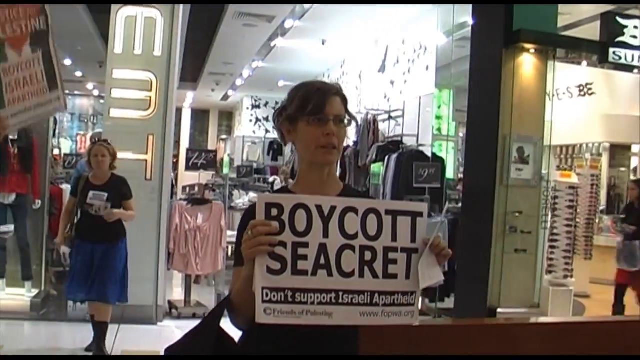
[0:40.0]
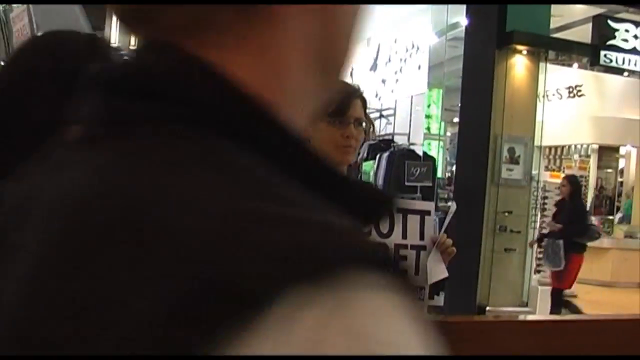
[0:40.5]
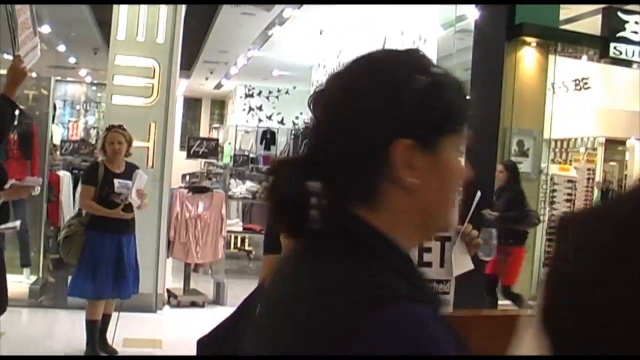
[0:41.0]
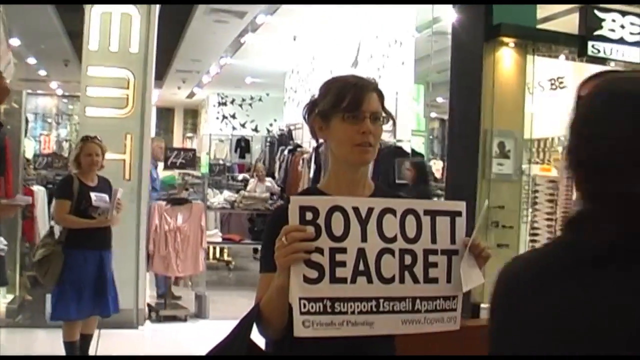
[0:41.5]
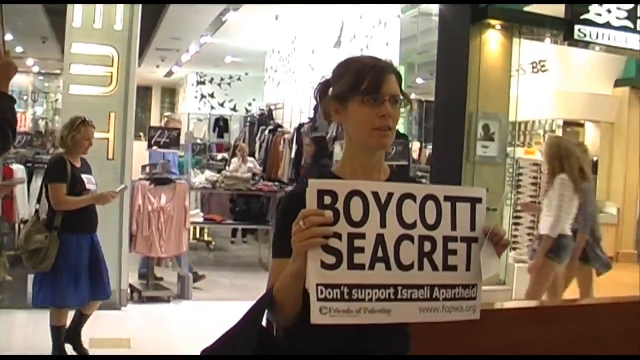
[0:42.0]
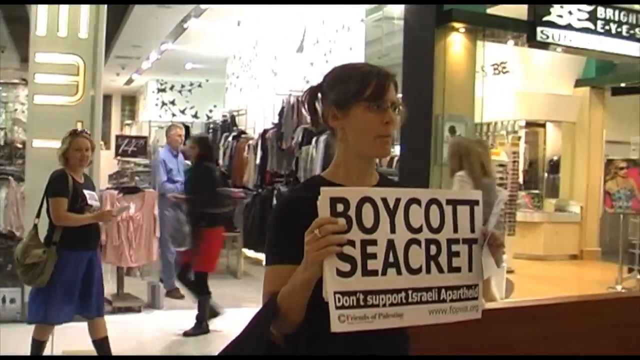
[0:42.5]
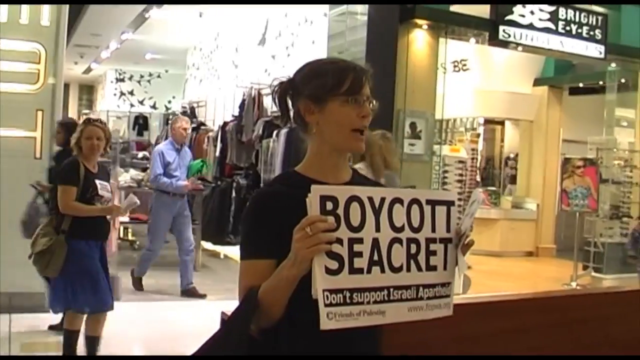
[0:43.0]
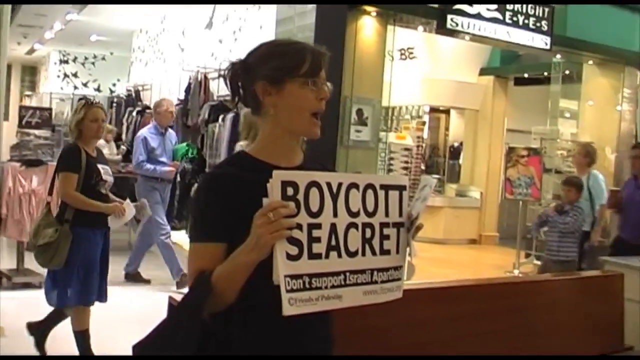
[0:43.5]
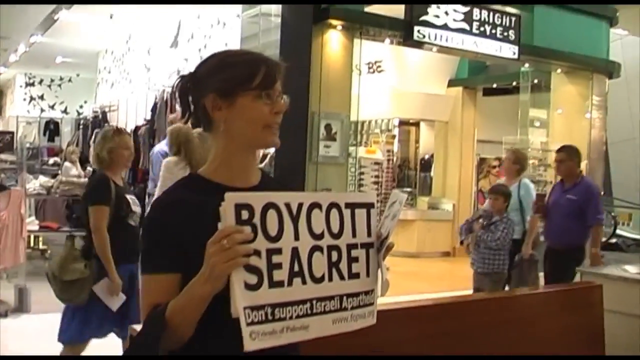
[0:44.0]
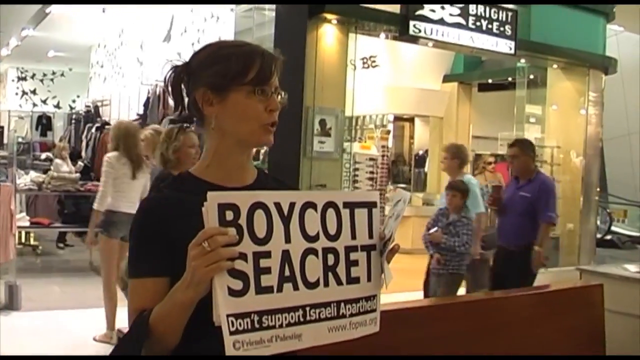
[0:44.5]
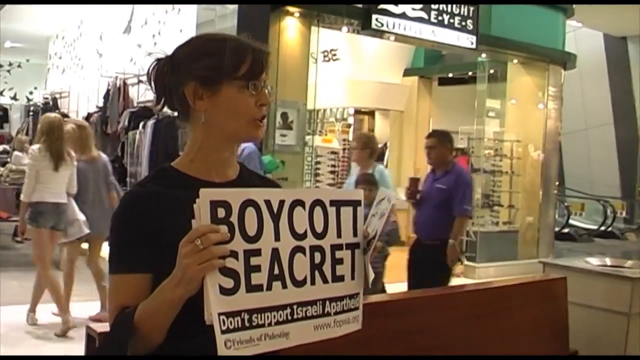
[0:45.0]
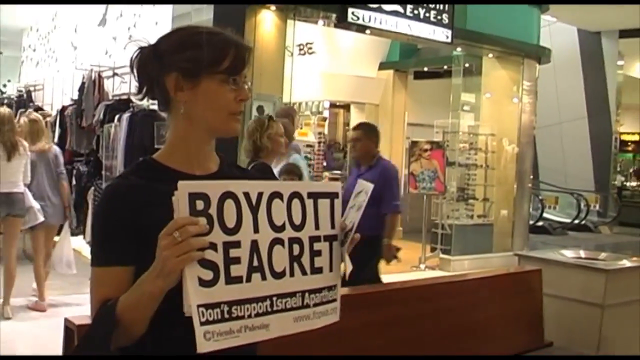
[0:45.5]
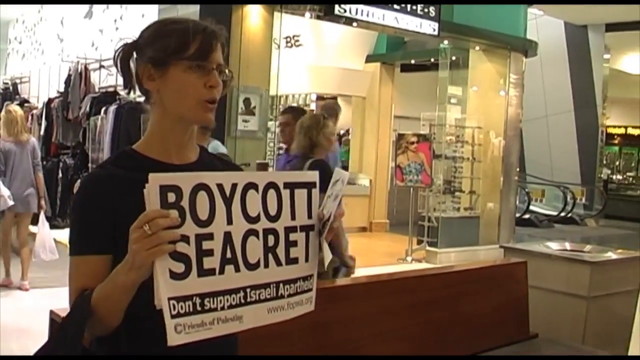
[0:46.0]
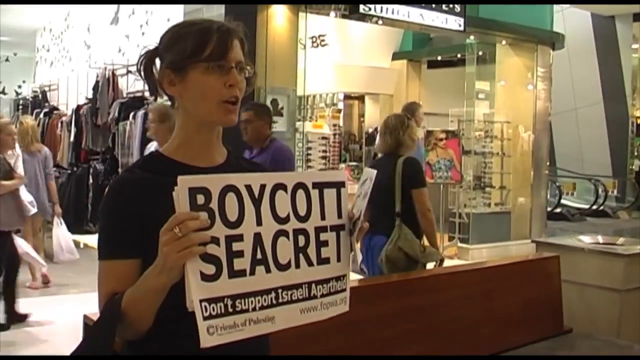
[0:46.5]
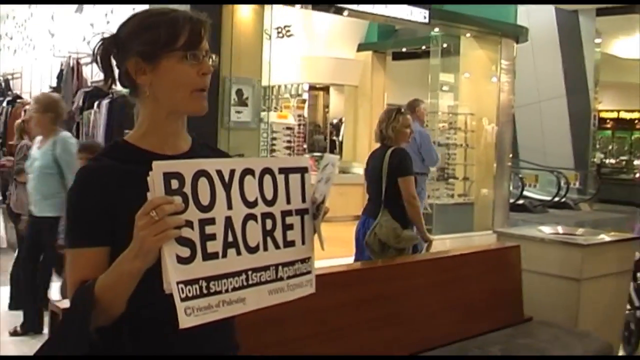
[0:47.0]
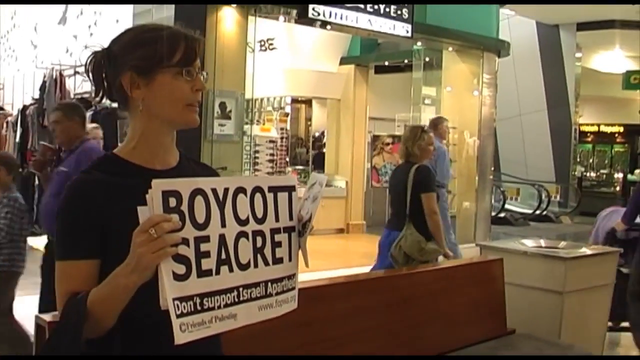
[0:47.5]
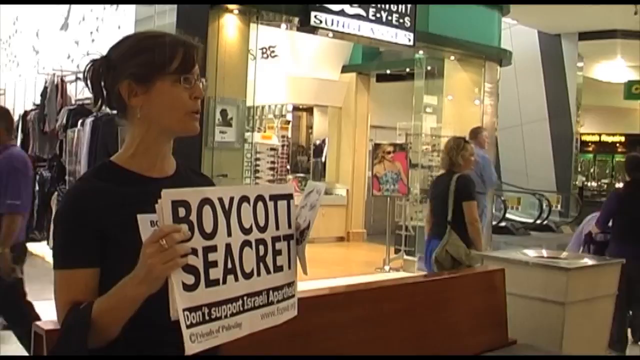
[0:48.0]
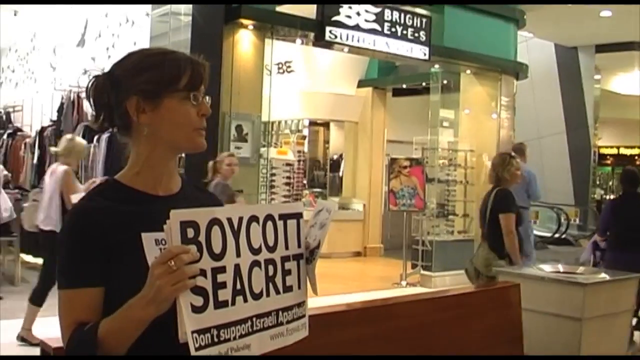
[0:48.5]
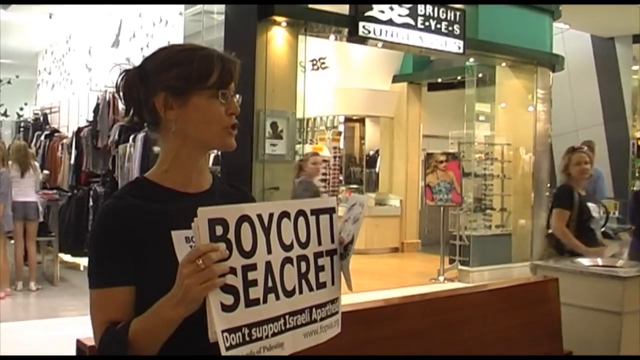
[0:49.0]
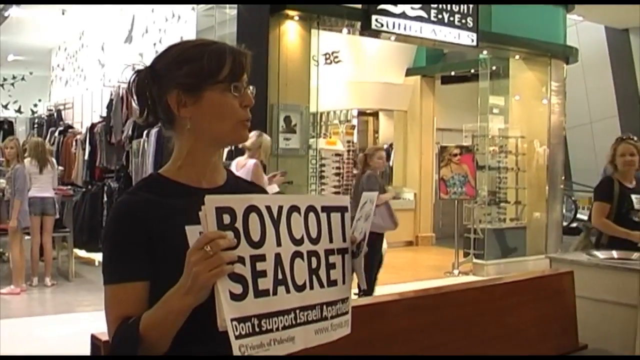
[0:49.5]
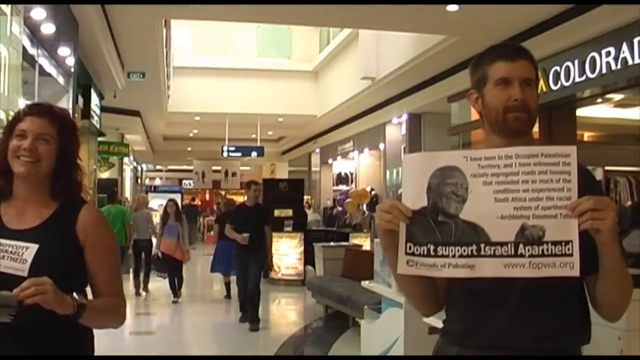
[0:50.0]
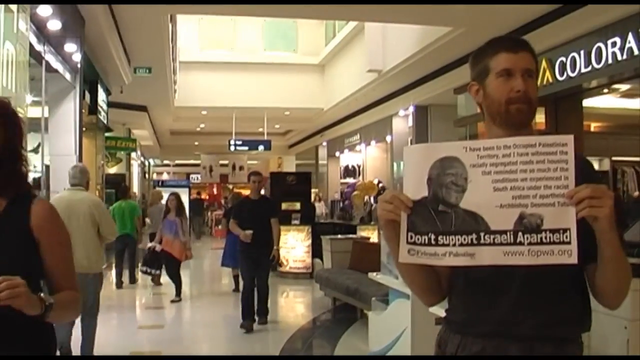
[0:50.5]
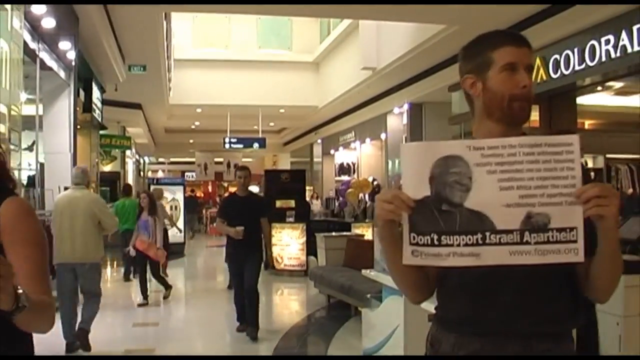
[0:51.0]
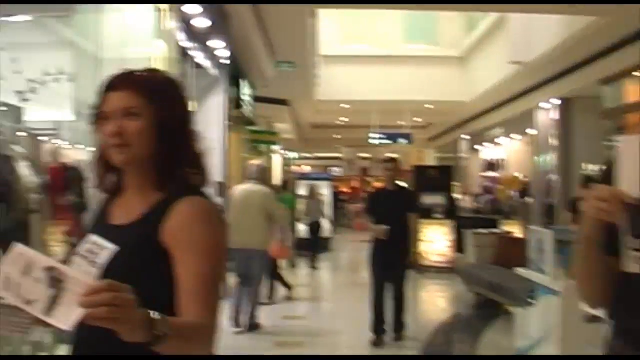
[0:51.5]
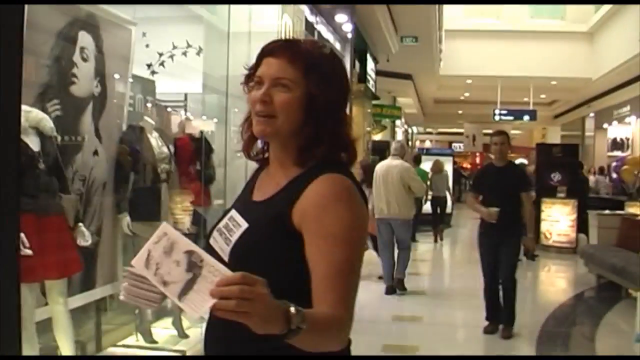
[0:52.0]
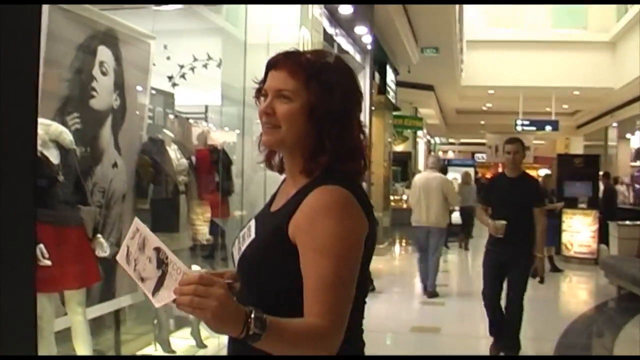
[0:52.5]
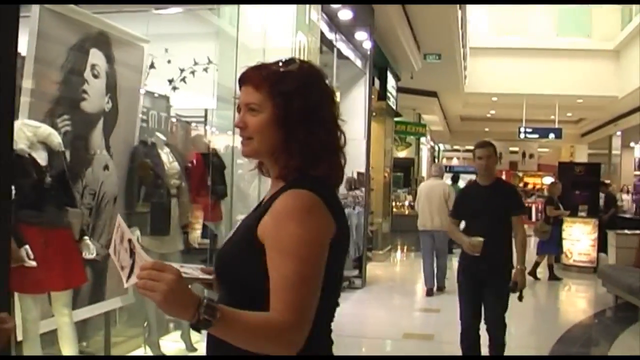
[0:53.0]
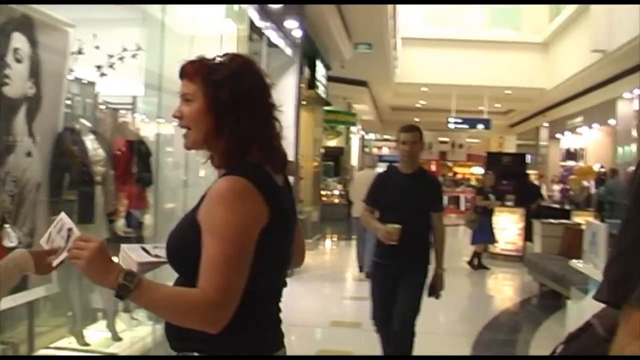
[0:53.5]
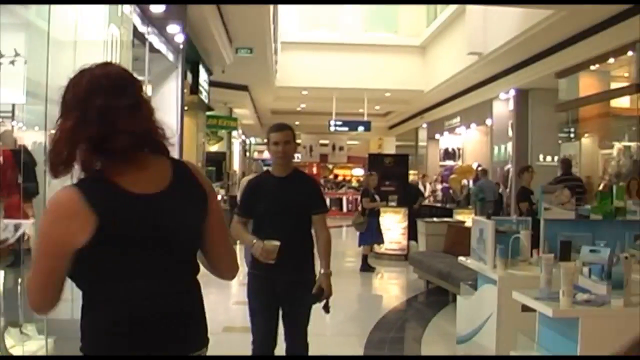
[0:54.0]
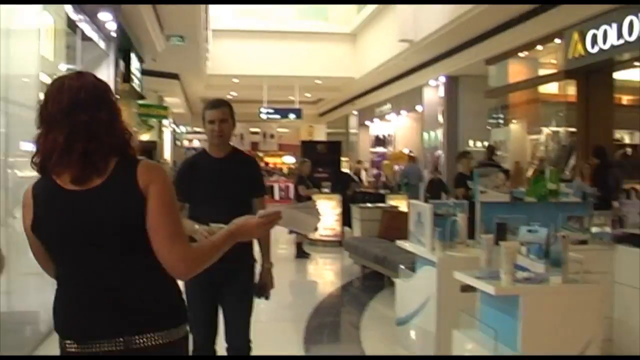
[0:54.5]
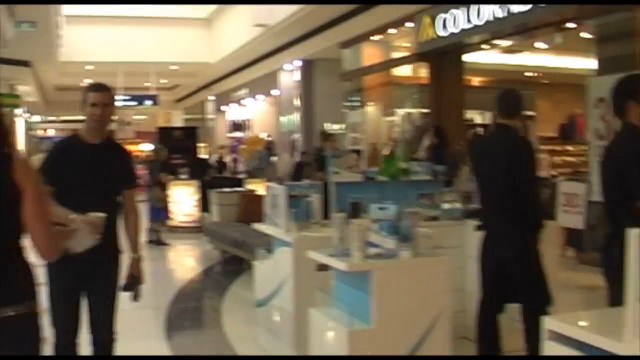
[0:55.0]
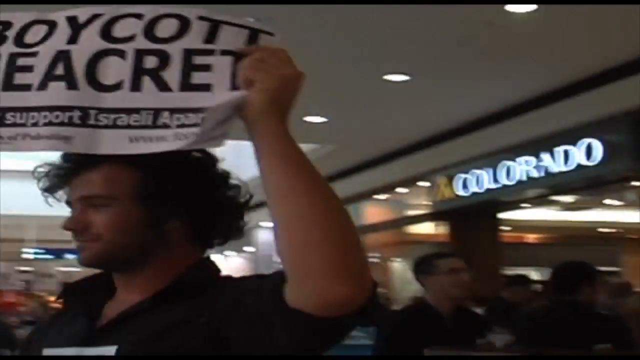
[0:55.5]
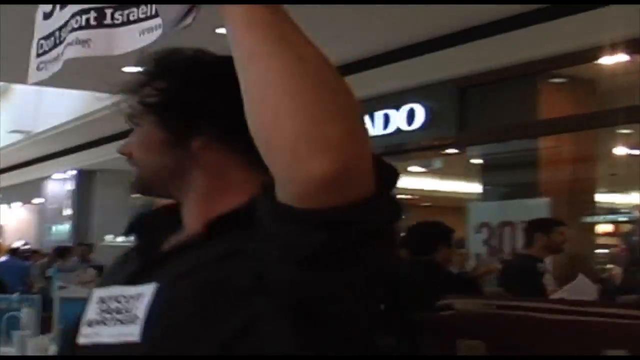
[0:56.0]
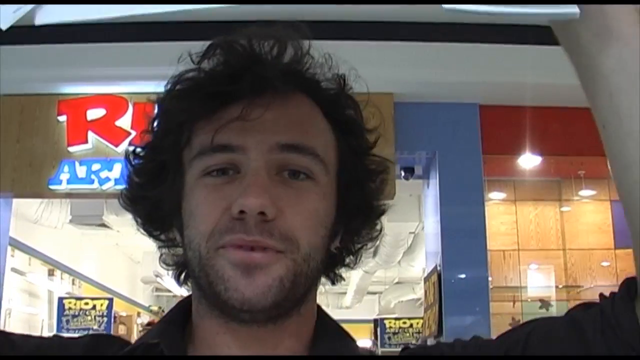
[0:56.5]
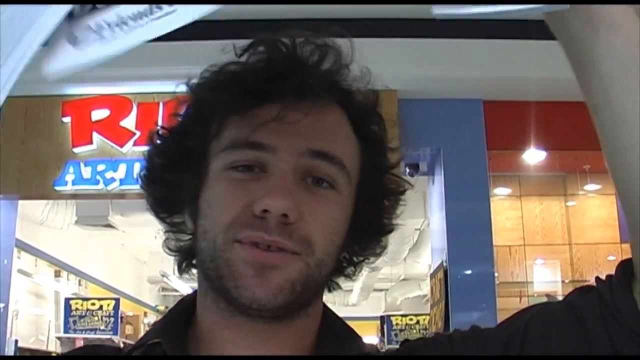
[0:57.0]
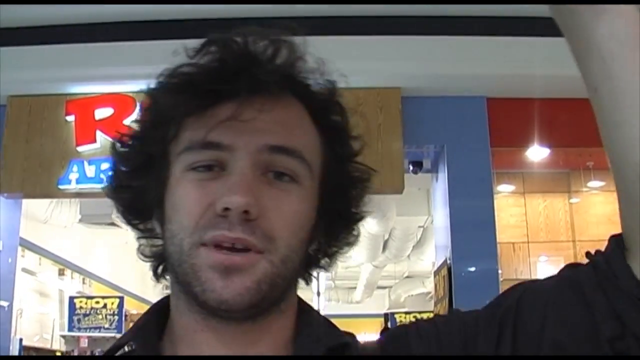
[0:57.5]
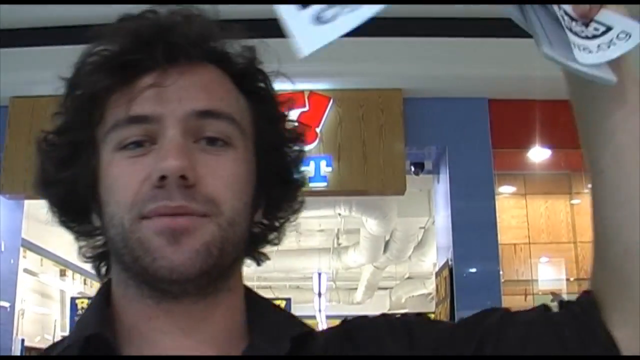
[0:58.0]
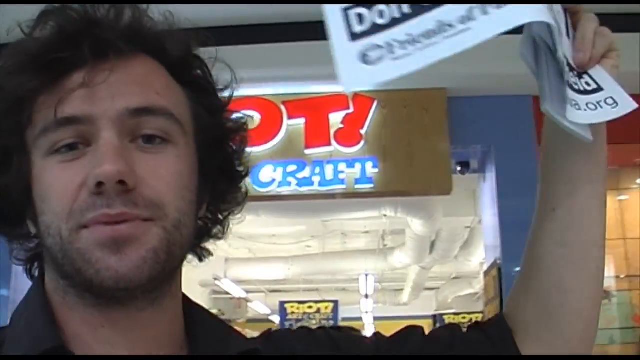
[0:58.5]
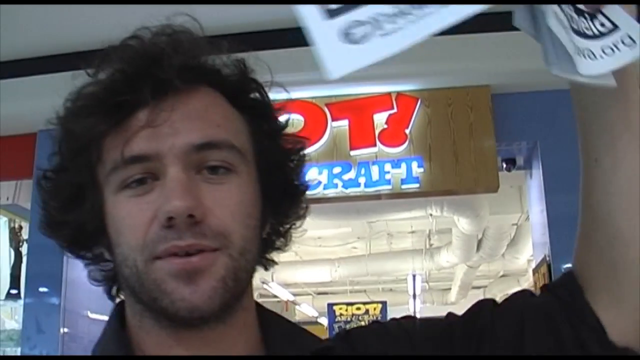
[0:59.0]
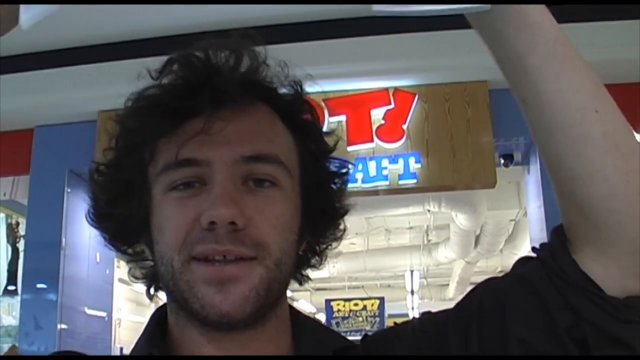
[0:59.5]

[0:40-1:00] In the indoor mall, people hold up signs that say "boycott secret" and "don't support Israeli apartheid." A young brunette man with a scraggly beard is in front of a store, in what appears to be a loosely put together indoor rally in front of a retail store whose sign says "Bright Eyes."